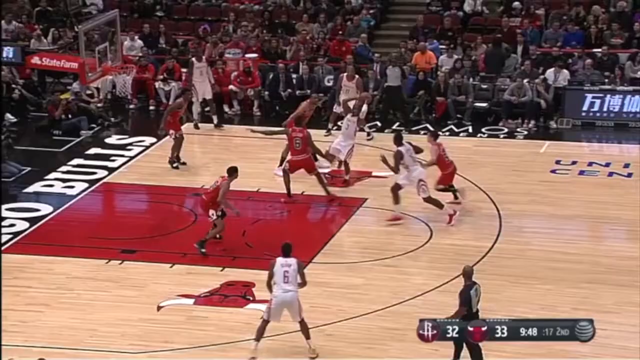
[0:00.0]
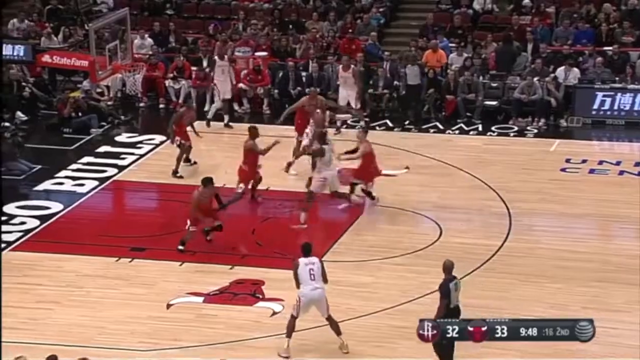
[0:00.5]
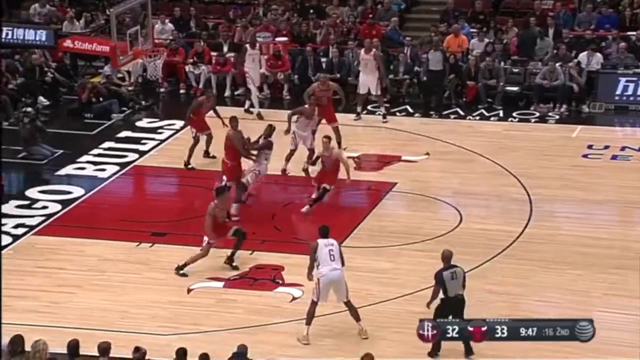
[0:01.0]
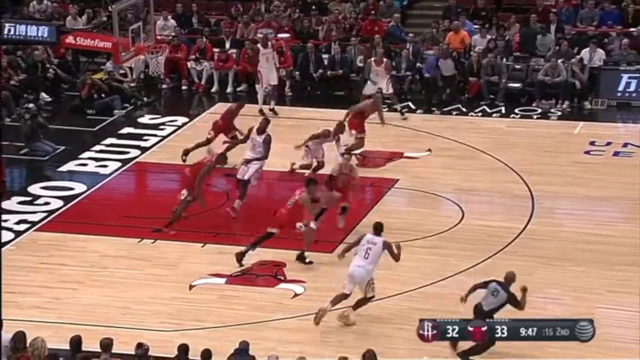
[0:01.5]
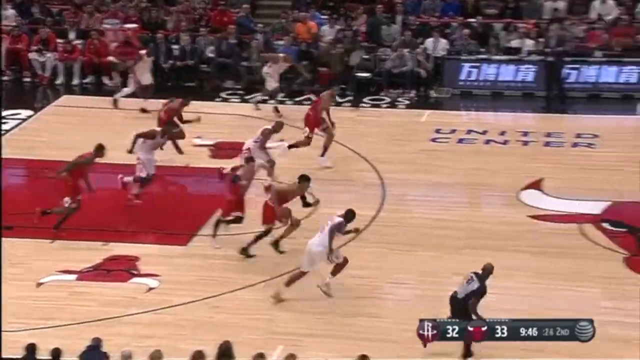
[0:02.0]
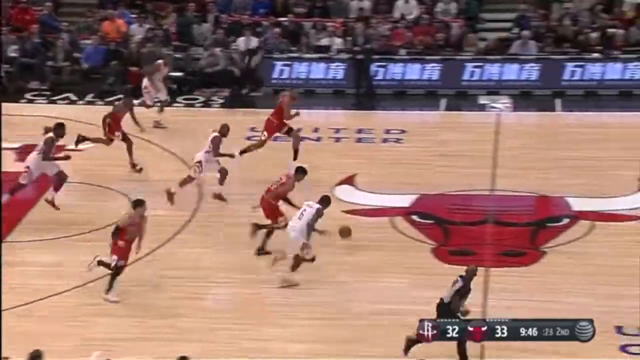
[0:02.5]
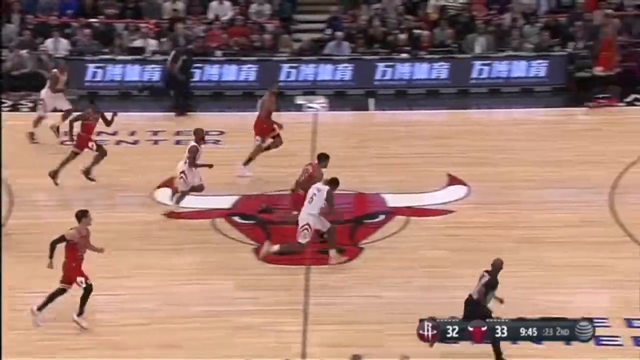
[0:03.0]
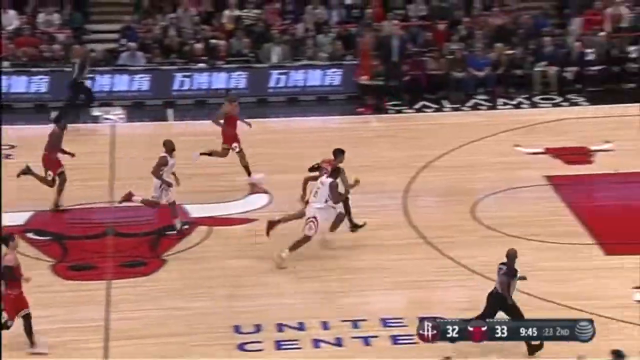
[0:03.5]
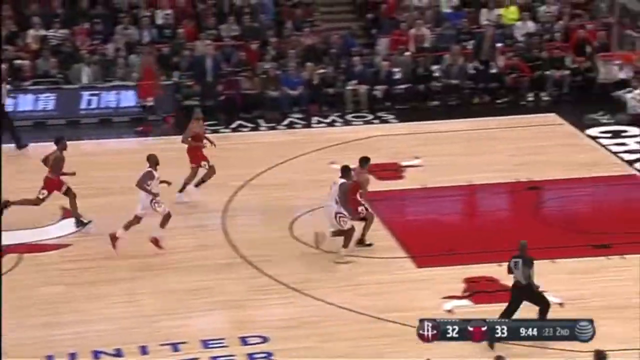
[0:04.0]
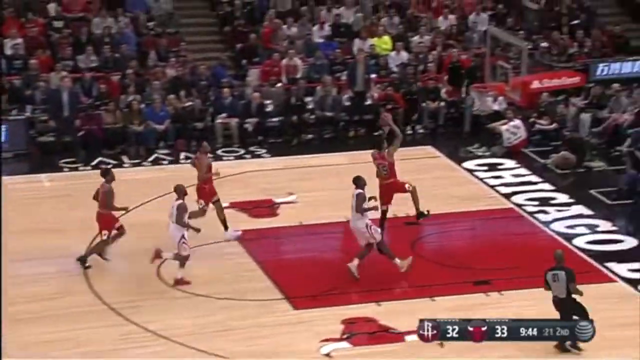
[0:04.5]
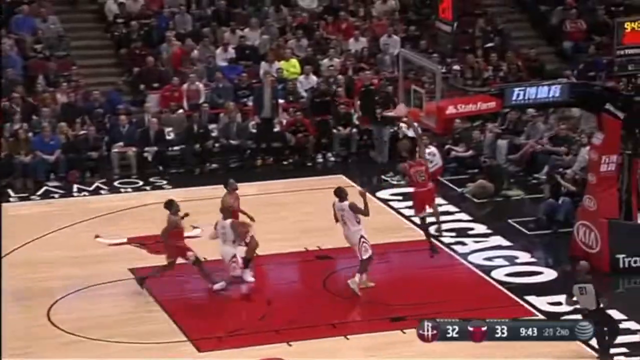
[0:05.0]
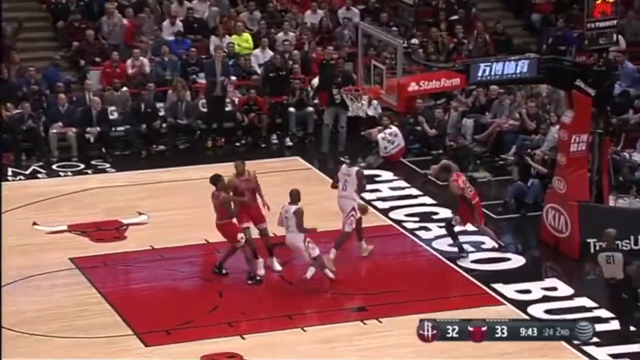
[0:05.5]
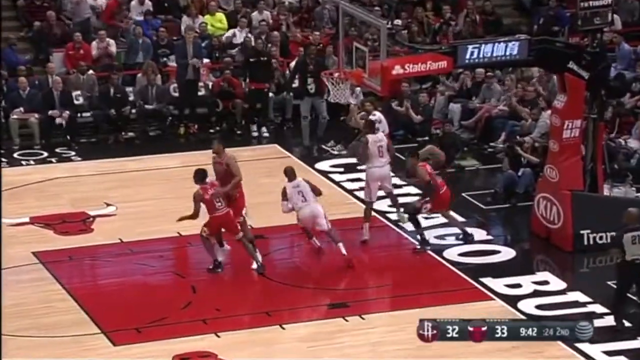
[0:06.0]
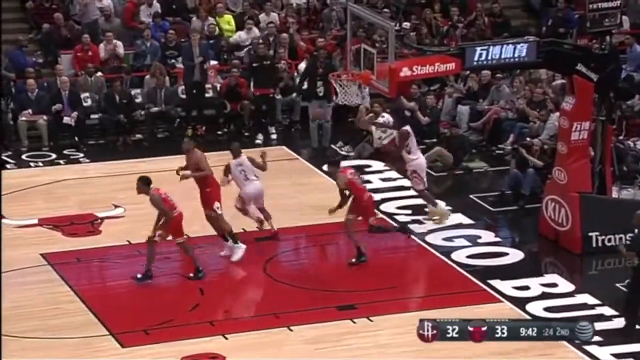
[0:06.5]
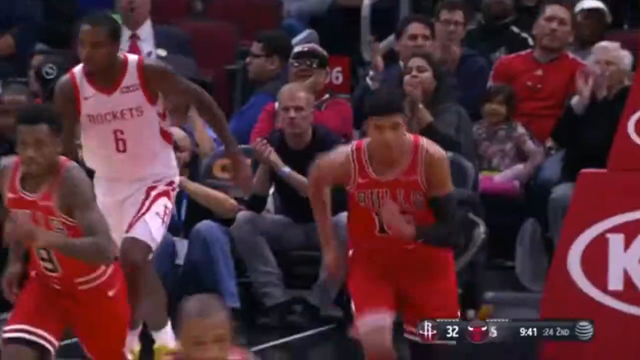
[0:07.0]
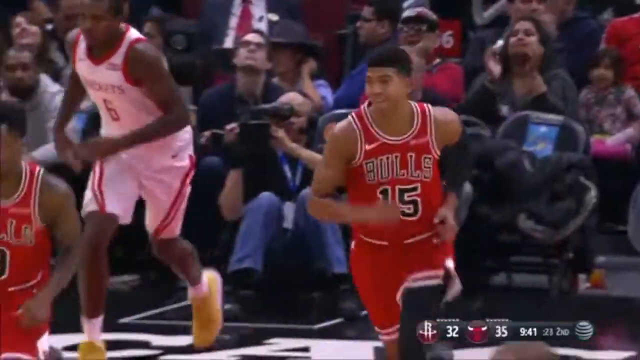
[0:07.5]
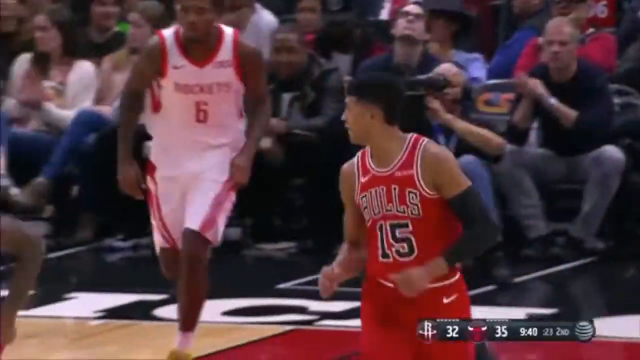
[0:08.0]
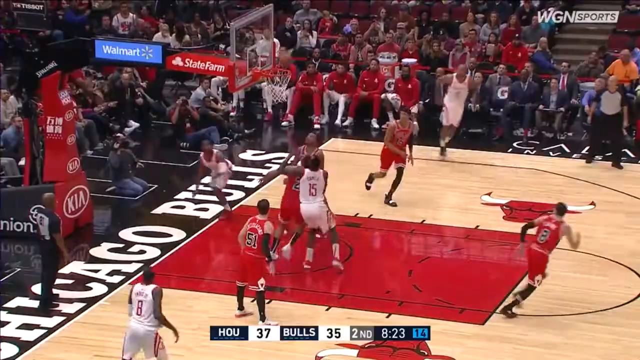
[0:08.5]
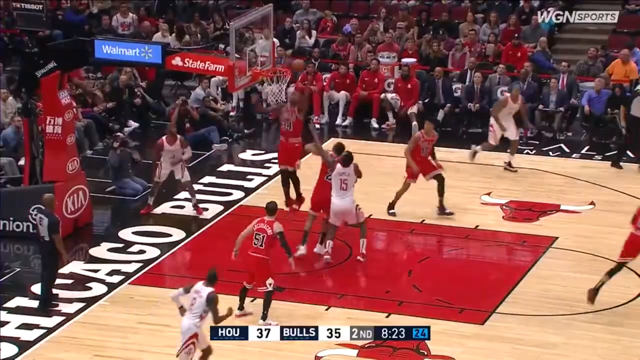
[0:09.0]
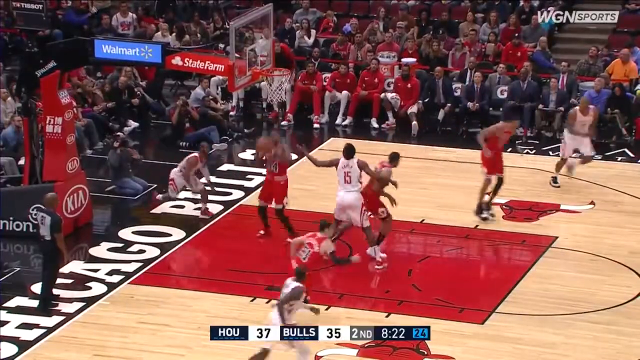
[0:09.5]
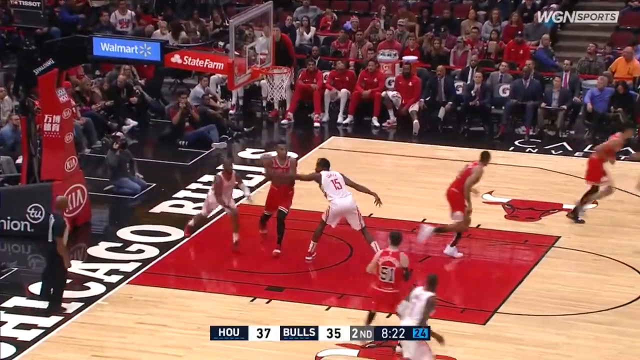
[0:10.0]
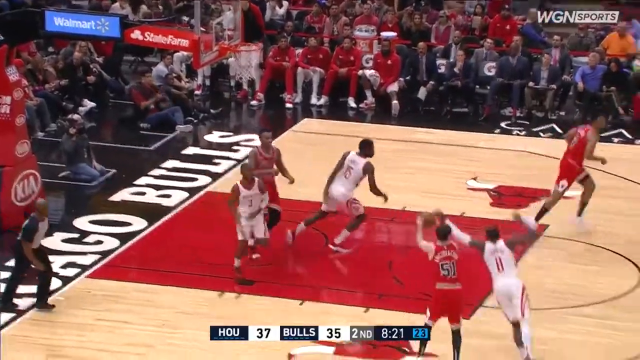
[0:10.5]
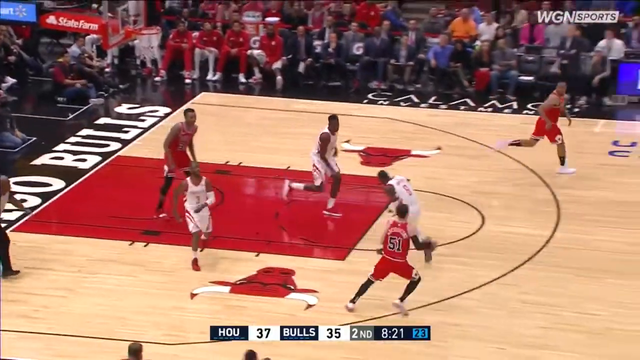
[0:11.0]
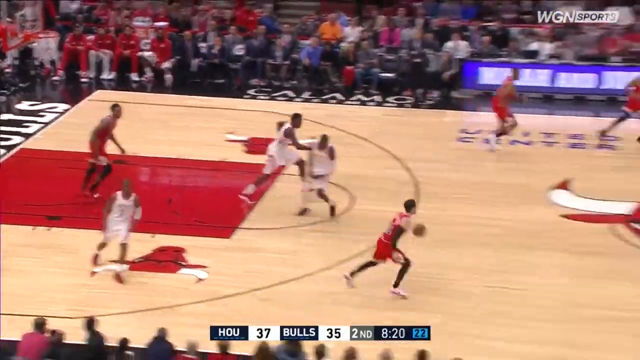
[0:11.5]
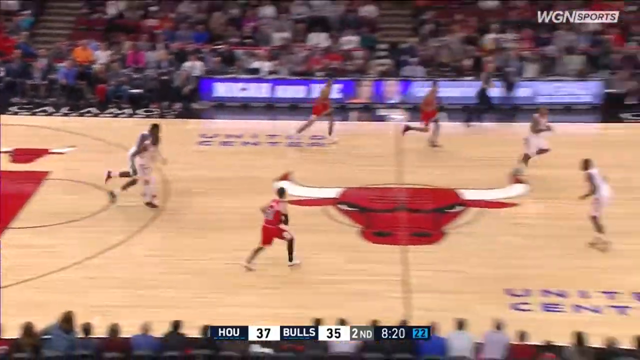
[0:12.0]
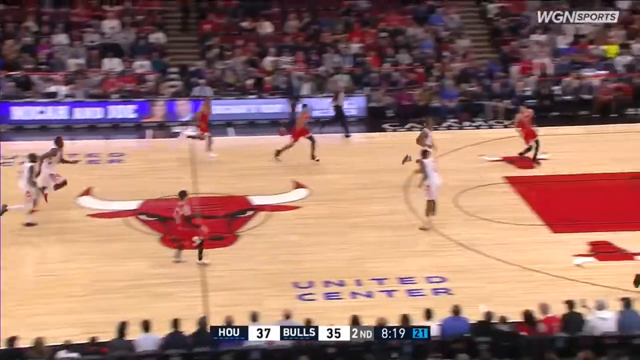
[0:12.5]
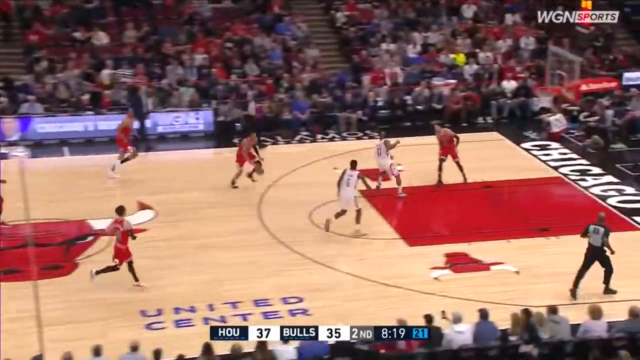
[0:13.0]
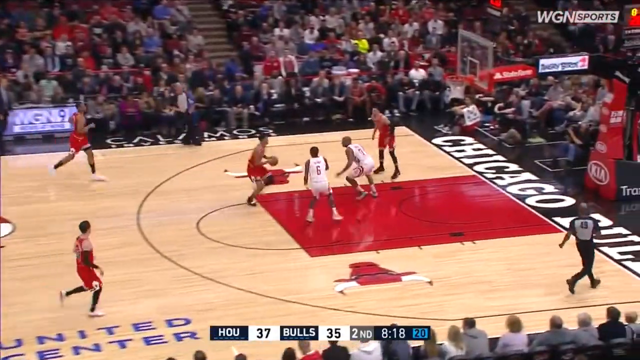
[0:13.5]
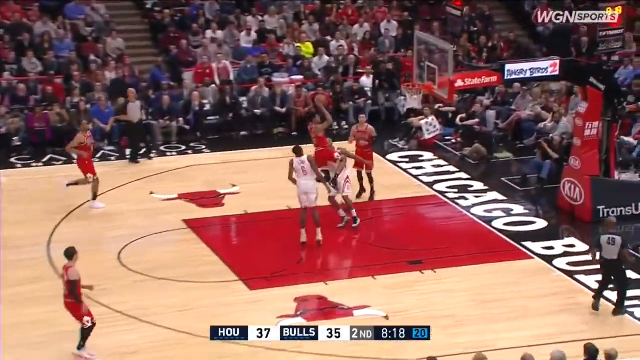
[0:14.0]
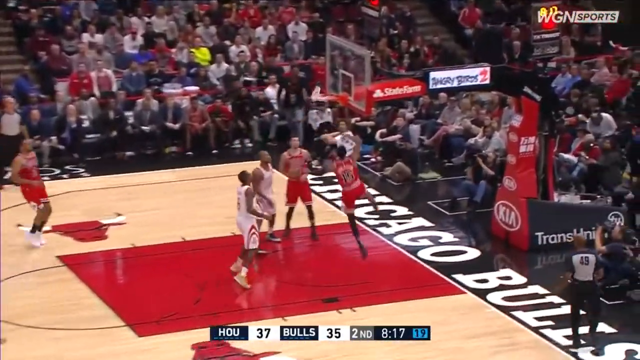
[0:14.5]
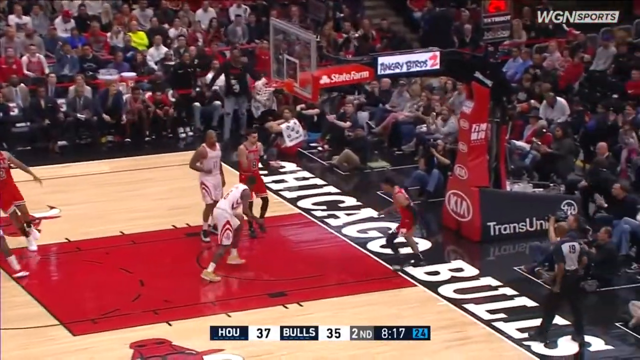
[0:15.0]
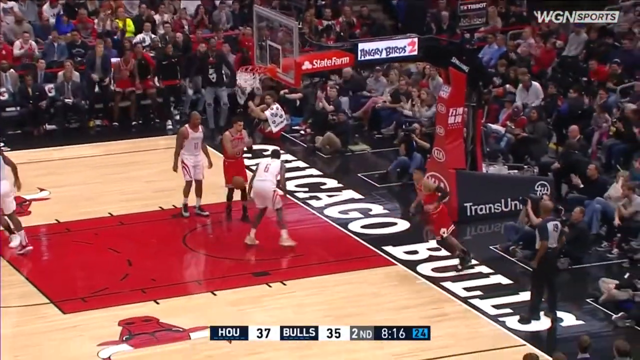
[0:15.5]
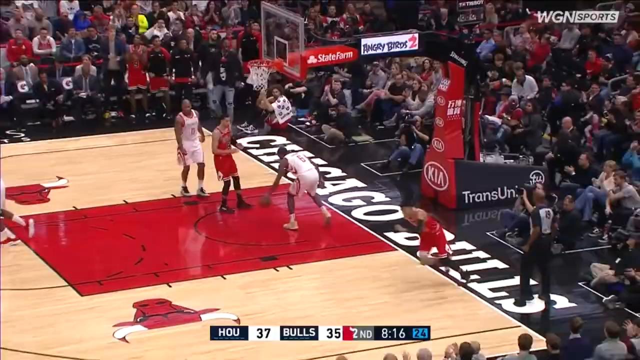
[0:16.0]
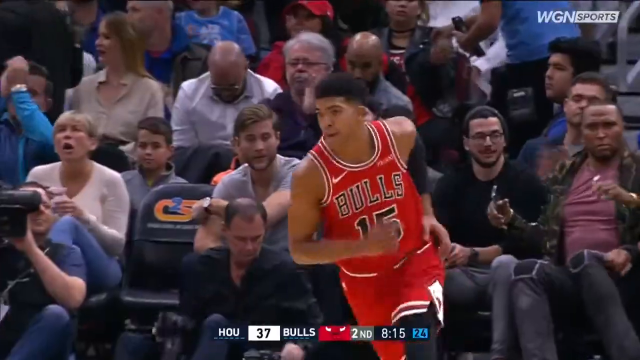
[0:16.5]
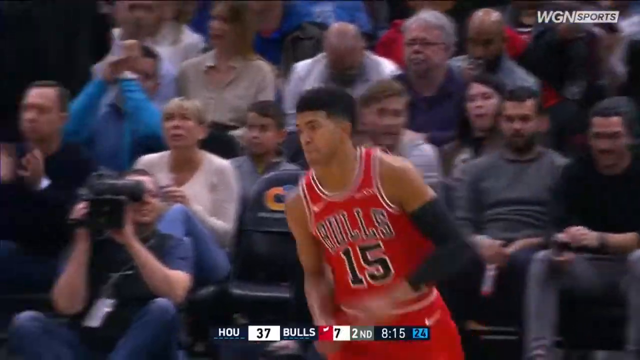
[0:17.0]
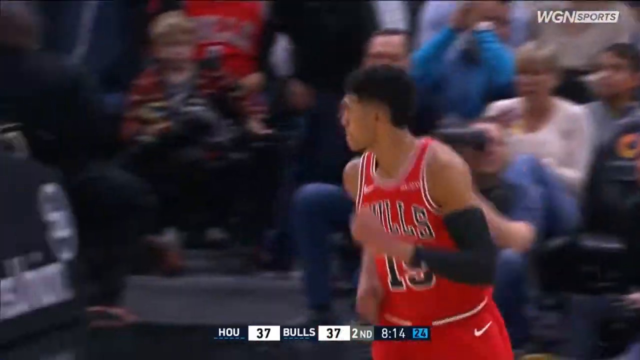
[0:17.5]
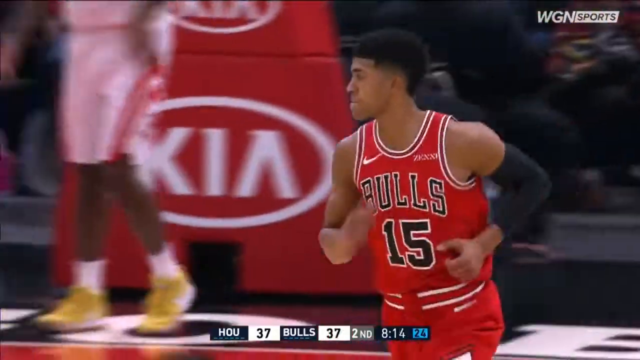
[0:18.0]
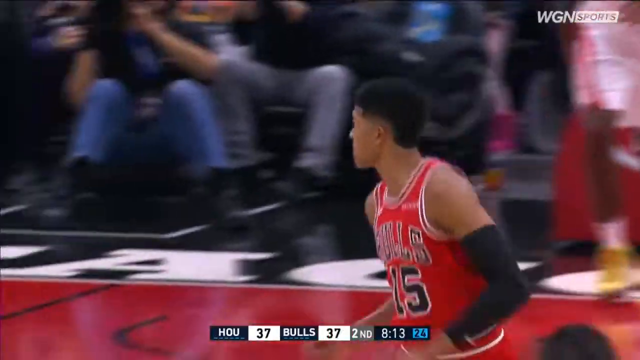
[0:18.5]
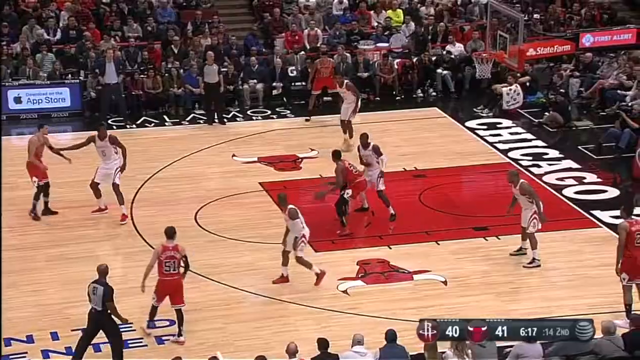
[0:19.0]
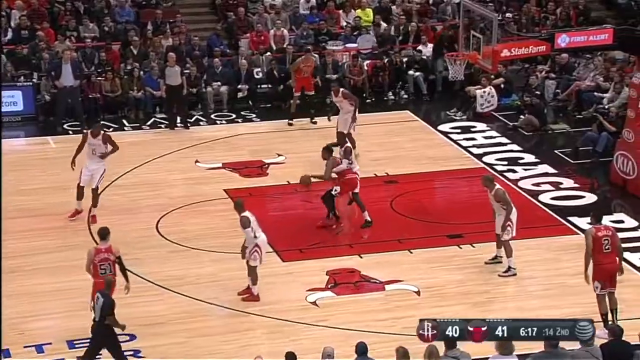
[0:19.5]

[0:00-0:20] A basketball game is underway between a team in red and a team in white. Number 15 on the red team scores a point, and the crowd is happy and cheers. The score at the bottom of the screen shows "HOU" with 37 points and the Chicago Bulls with 35 points. At the start, the clock shows 8 minutes and 22 seconds in the second round; by the end, the game is still in the second round with 8 minutes and 13 seconds on the clock. In the top right corner is "WGN Sports": "WGN" is in white, followed by a white rectangle with "Sports" written in black. A Chicago Bulls head is painted in the middle of the basketball court.